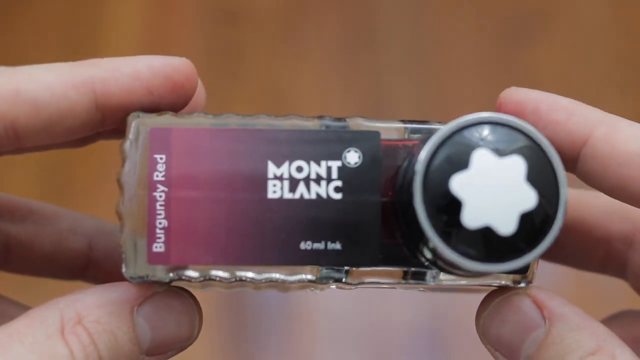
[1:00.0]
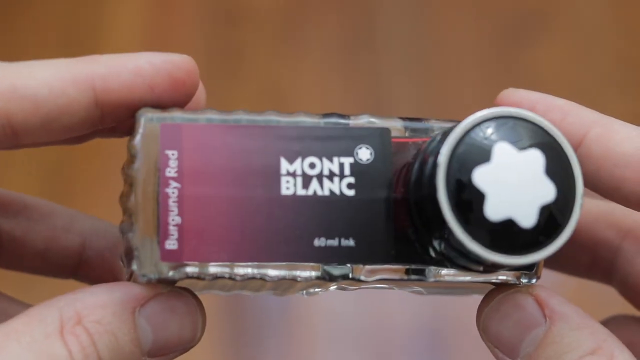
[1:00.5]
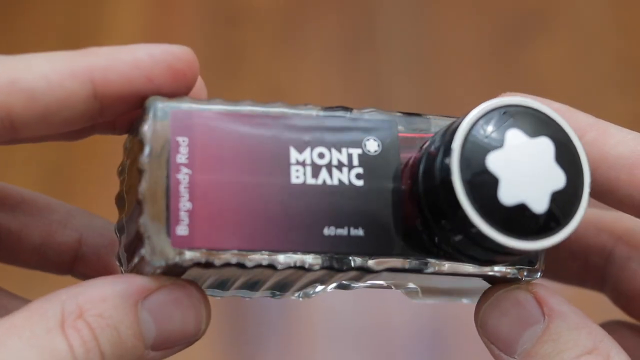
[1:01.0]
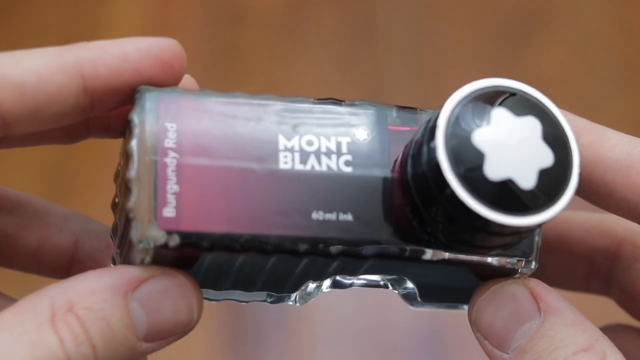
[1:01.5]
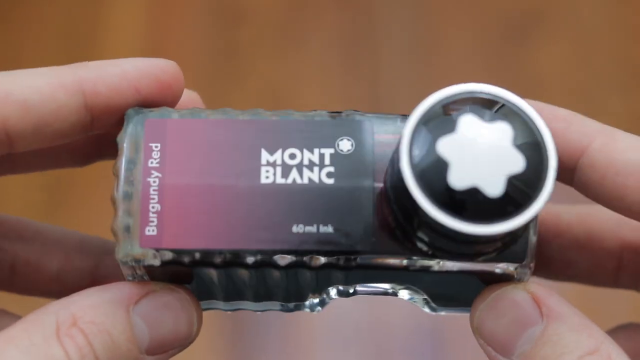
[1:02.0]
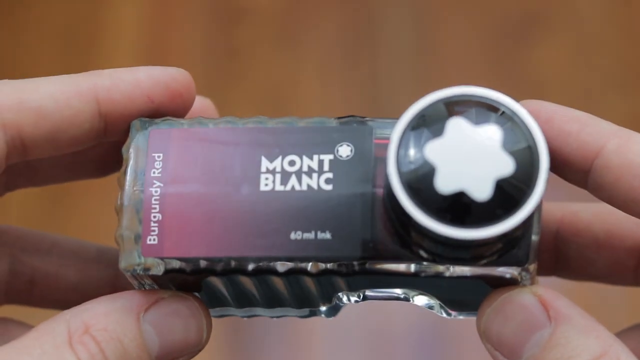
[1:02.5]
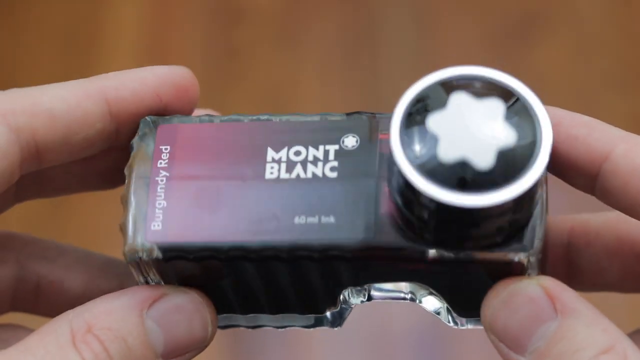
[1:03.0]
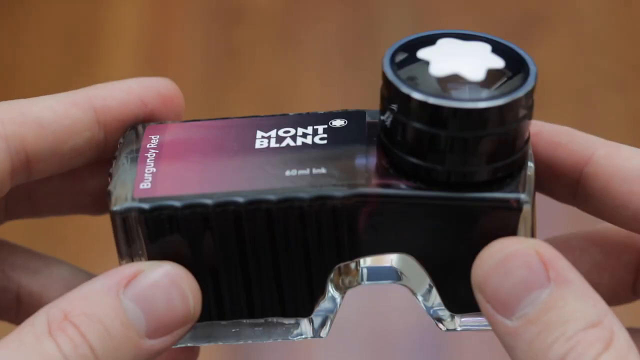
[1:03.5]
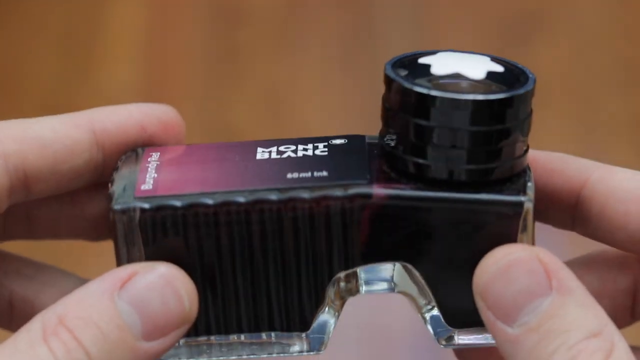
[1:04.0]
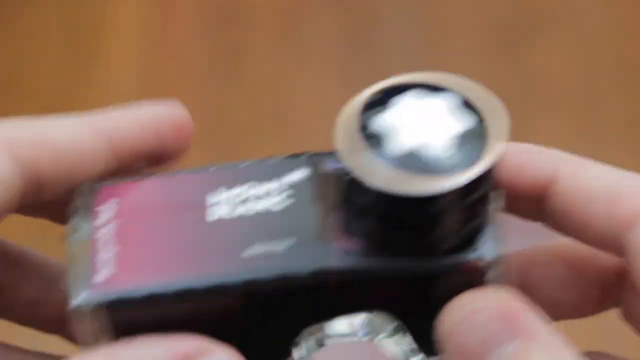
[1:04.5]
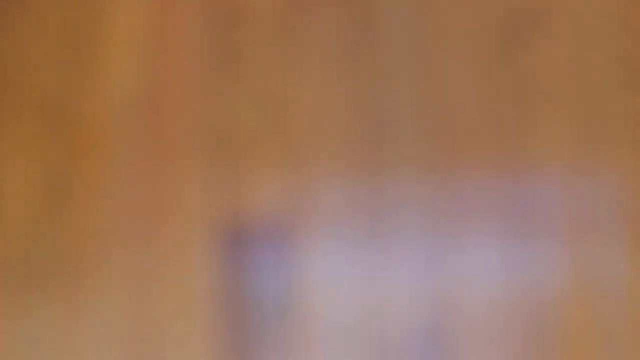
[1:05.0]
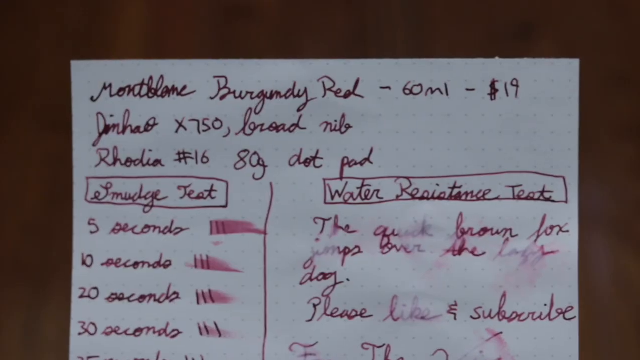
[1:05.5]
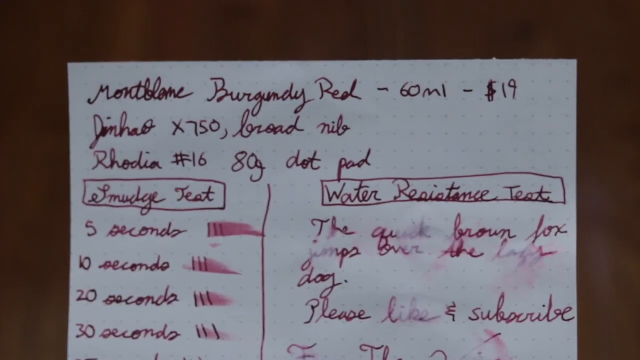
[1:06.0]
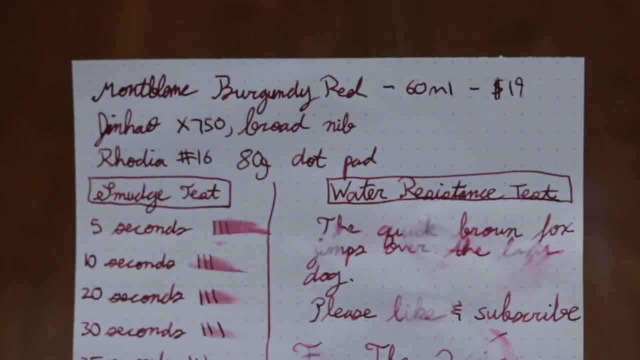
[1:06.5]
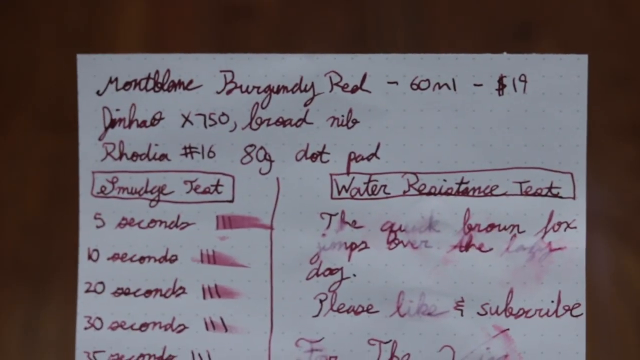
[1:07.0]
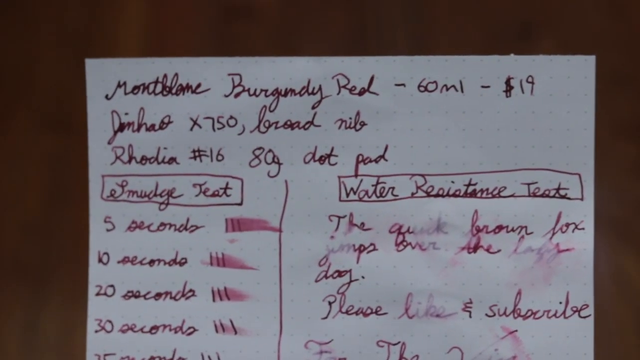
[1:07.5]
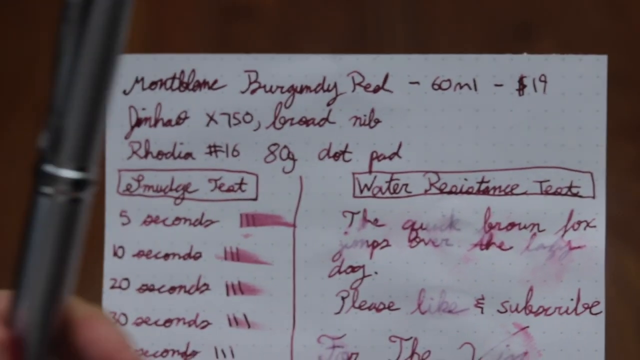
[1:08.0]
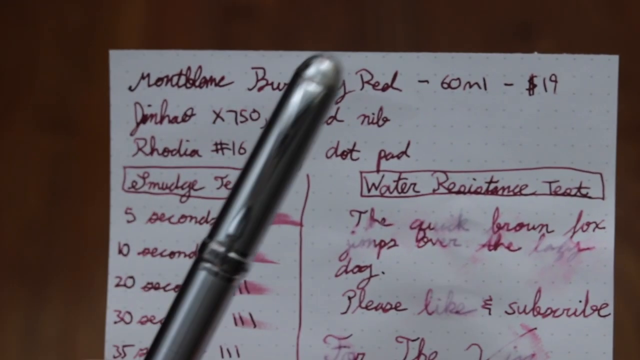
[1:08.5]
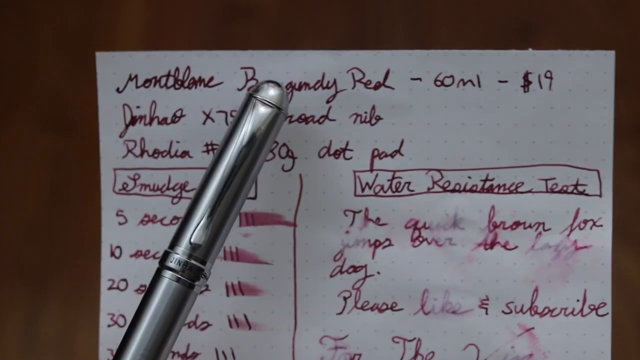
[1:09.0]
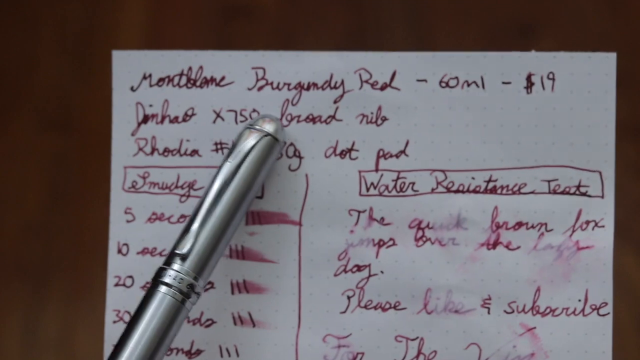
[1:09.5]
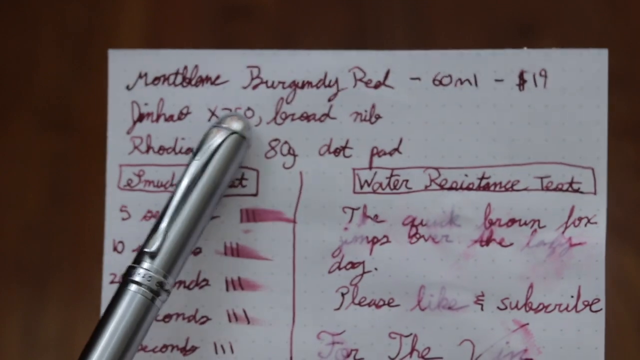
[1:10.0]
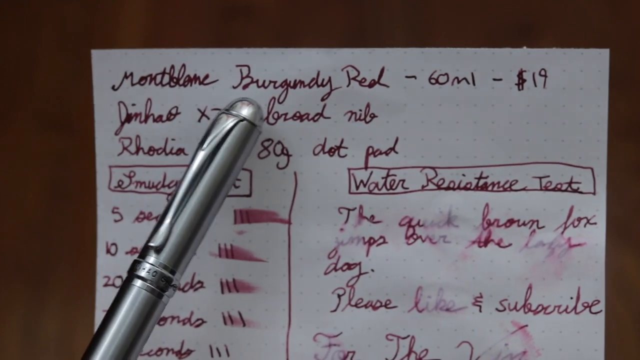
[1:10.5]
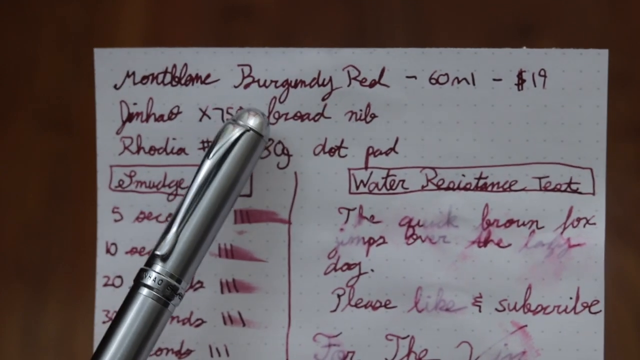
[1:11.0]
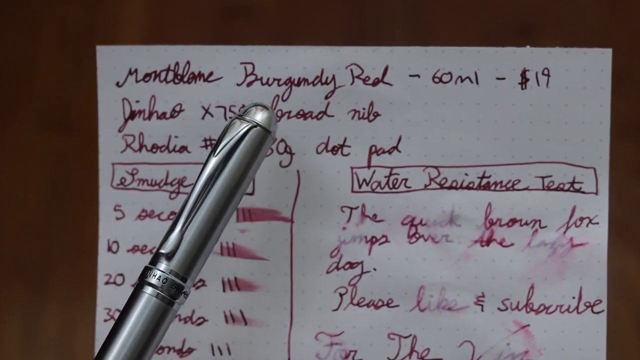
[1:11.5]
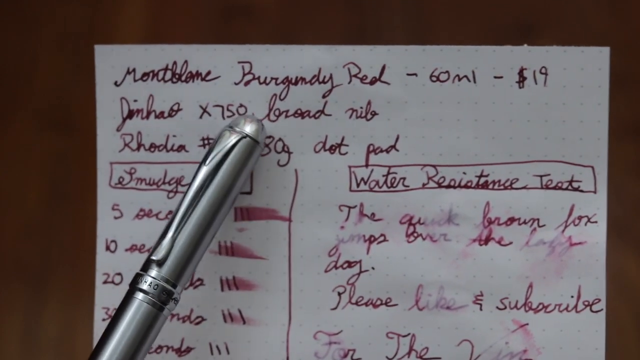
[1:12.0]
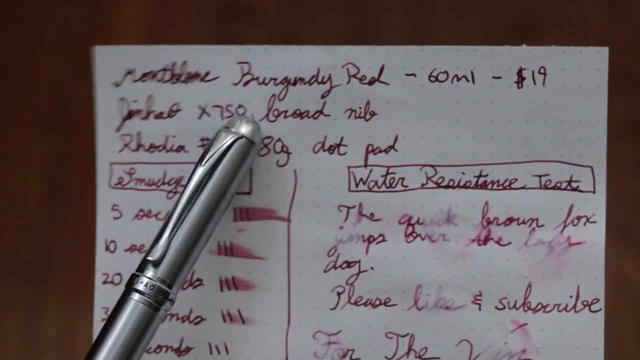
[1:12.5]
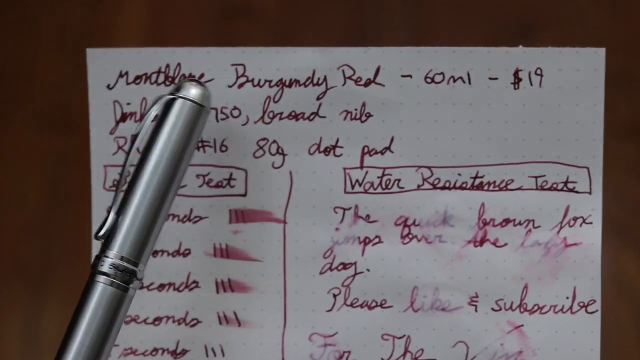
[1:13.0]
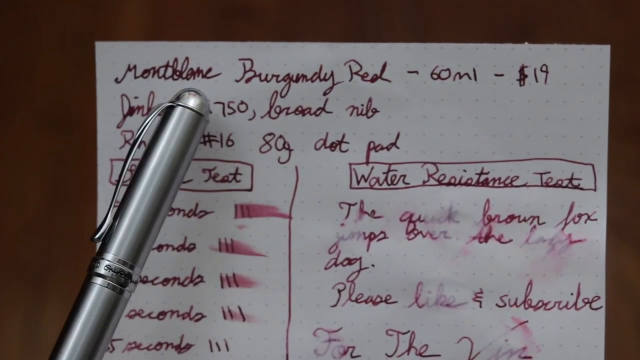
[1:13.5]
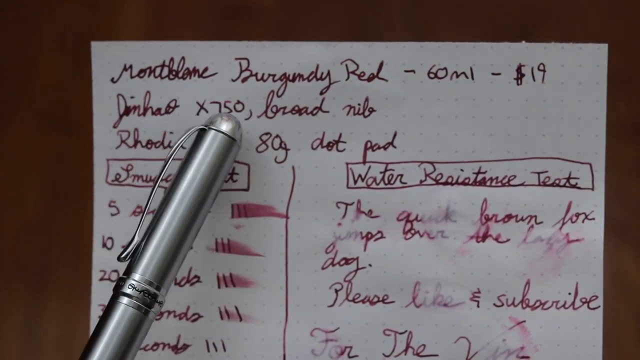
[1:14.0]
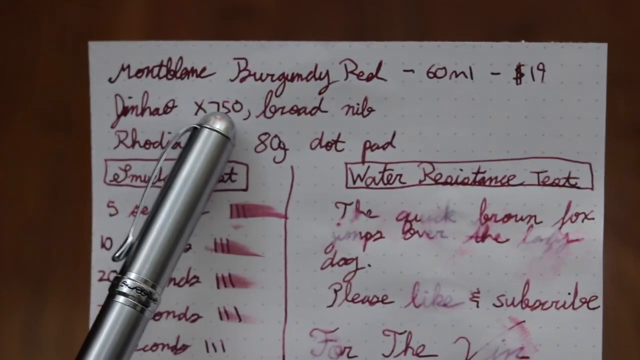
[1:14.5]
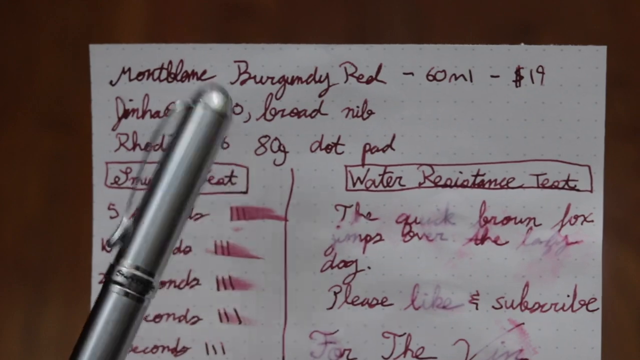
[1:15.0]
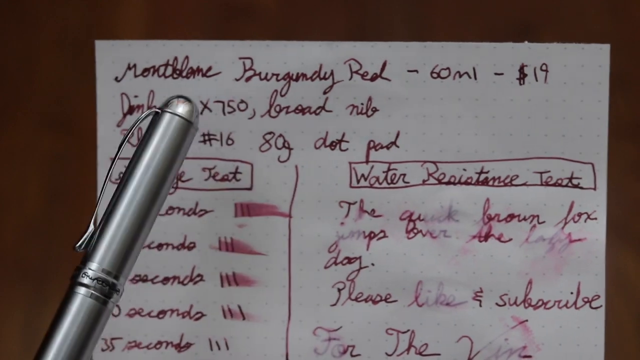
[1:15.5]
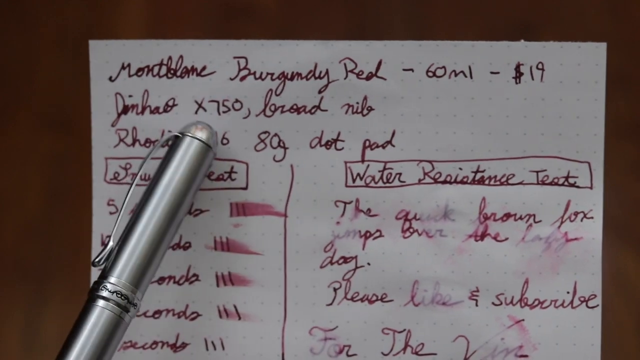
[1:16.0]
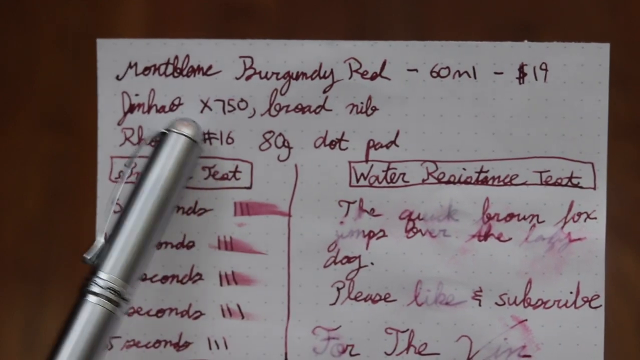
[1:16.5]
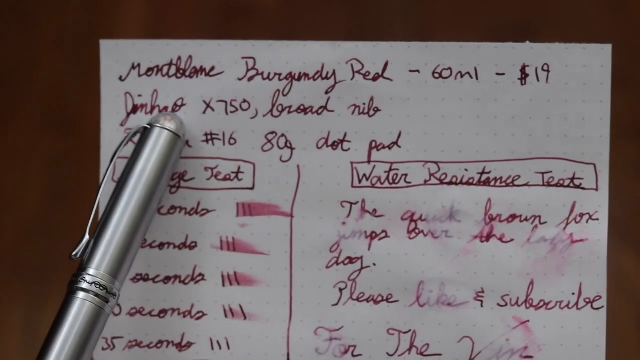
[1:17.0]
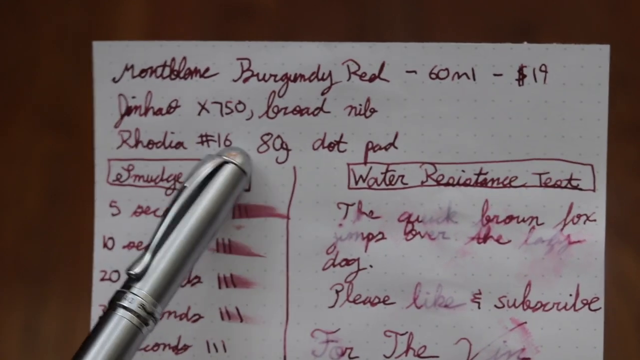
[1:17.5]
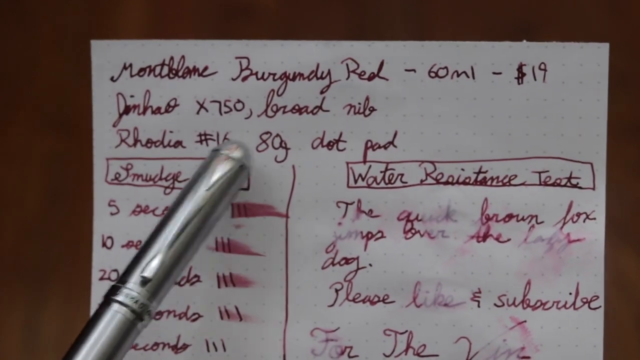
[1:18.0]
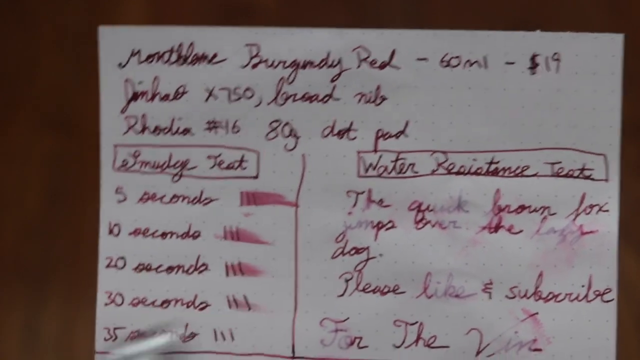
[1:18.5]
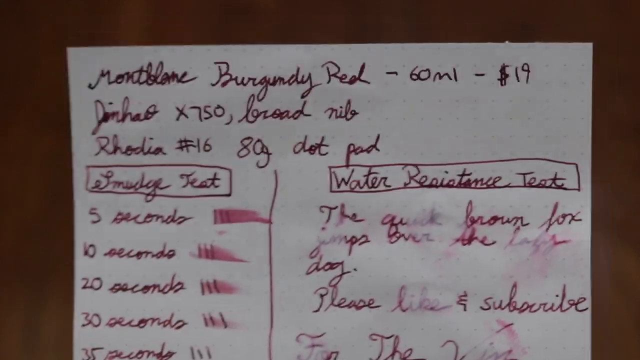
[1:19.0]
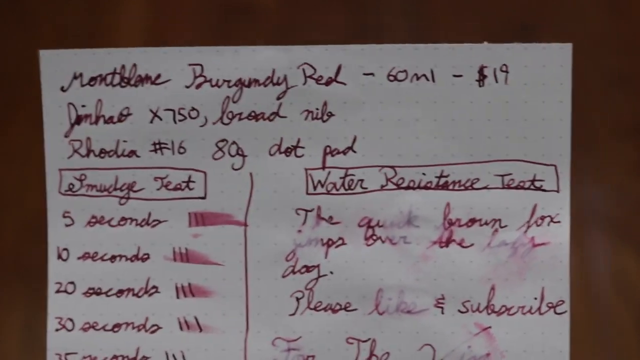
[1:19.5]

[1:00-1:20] The top of the bottle with all its label information is shown. The left hand pulls the bottle away, and the shot shifts to a piece of paper or a card with a bit of writing on it, clearly handwritten rather than typewritten. The presenter appears to be holding the paper with his right hand. He brings a pen into view; the pen appears to be silver, with a place to twist off the top roughly three quarters to halfway down. With the pen he points to a line that reads "Jenhal, X750, Broad Nib", taps the "750" twice, and then moves the pen down to the next line, which reads "Rodia #16 ADG dot pad". The paper keeps shaking, indicating that the presenter is holding it in front of the camera rather than it lying on a flat surface.